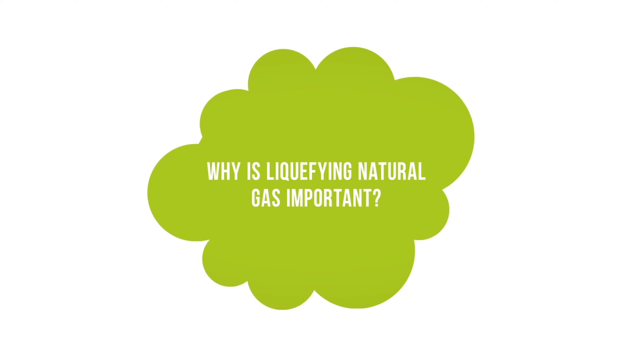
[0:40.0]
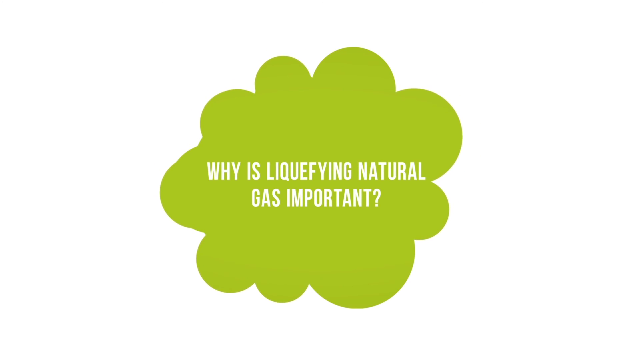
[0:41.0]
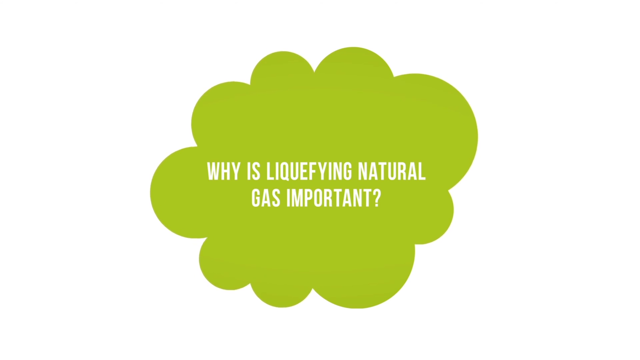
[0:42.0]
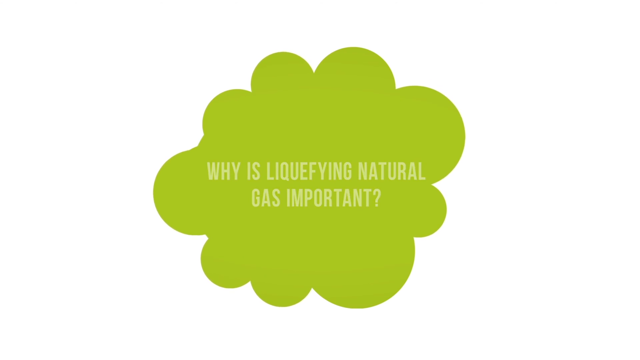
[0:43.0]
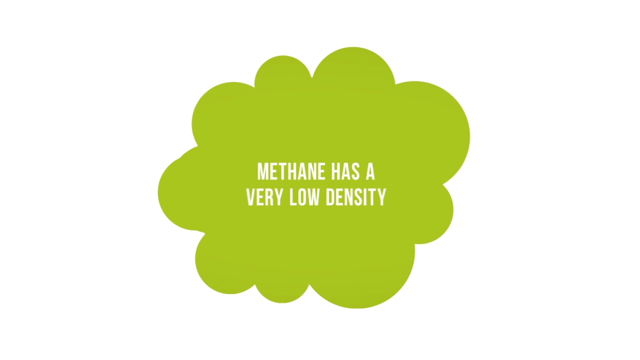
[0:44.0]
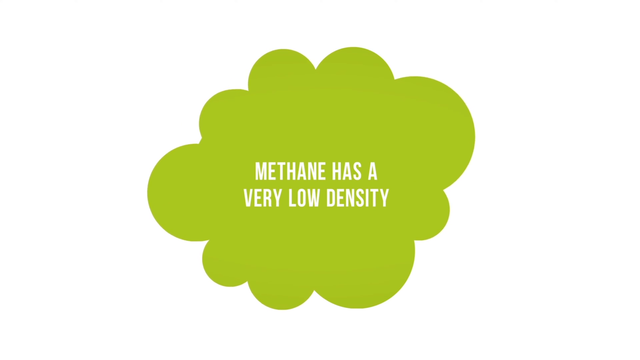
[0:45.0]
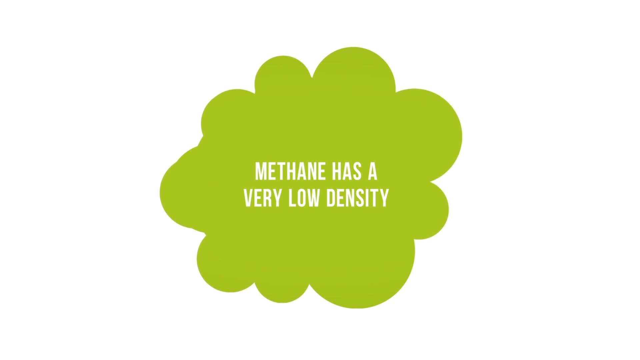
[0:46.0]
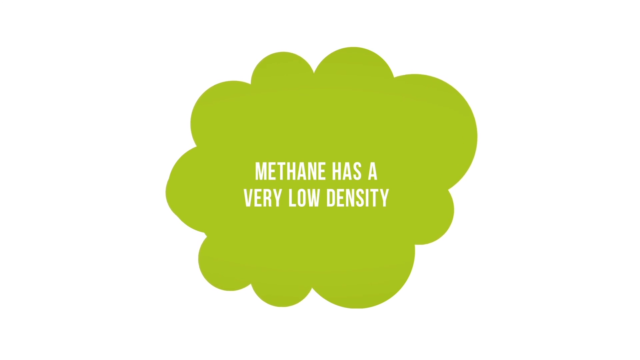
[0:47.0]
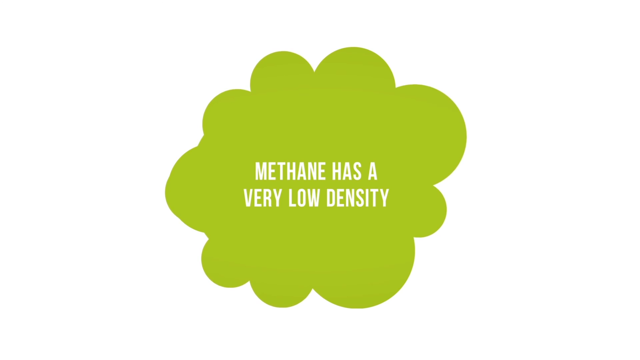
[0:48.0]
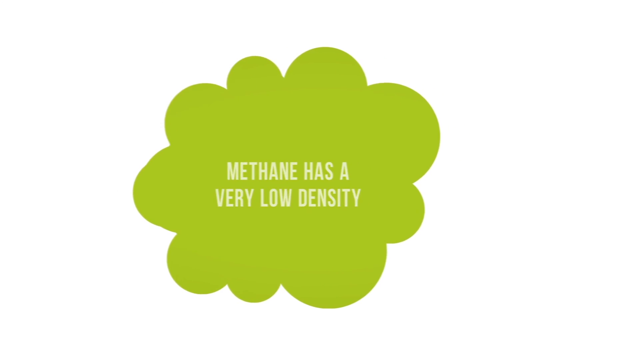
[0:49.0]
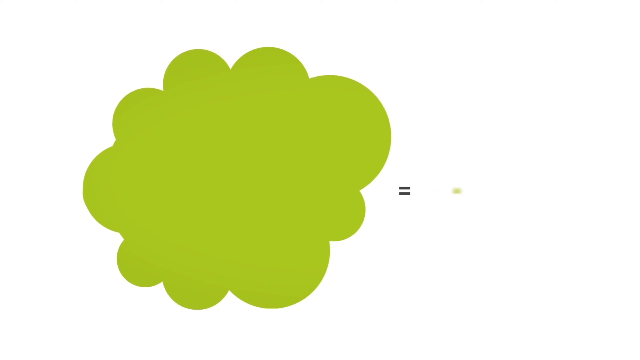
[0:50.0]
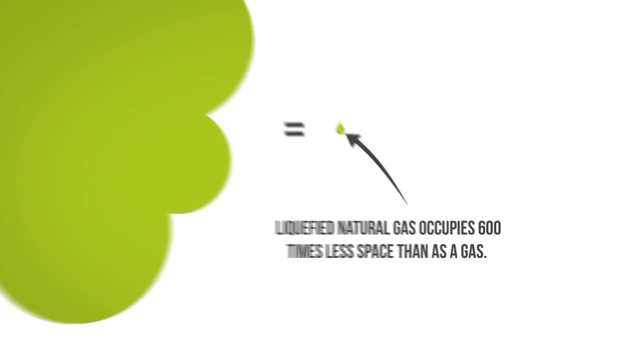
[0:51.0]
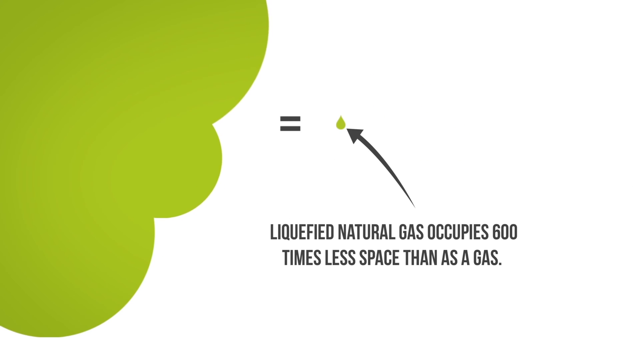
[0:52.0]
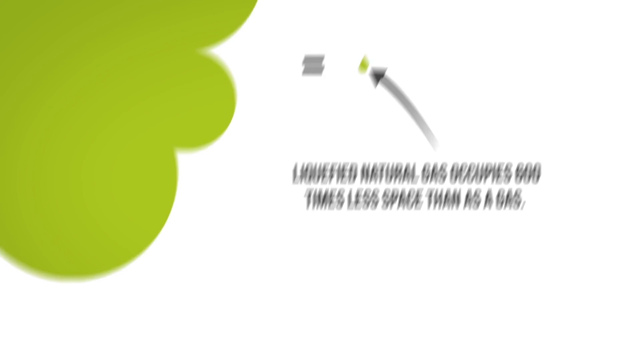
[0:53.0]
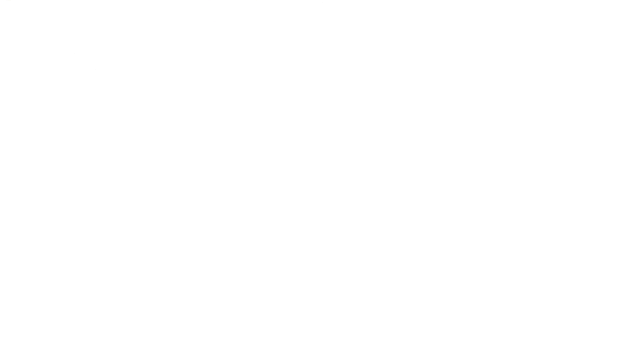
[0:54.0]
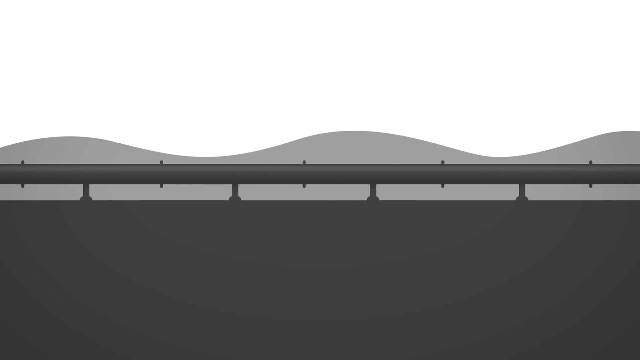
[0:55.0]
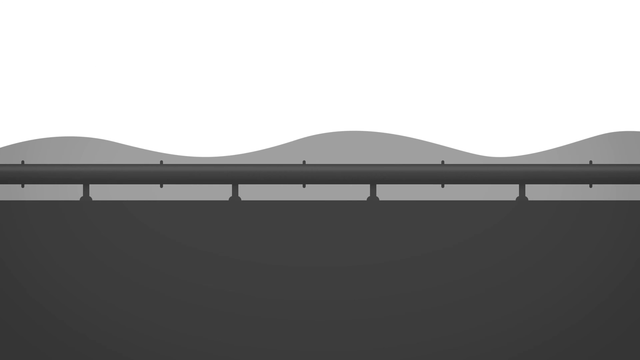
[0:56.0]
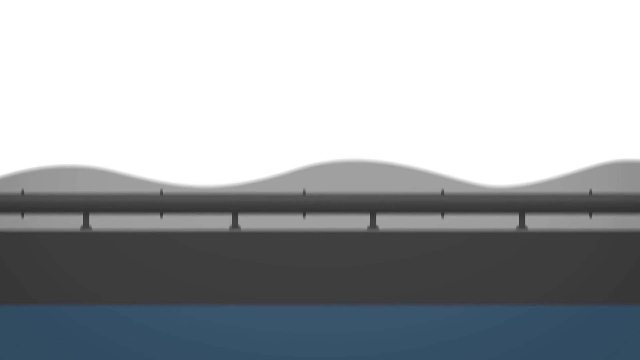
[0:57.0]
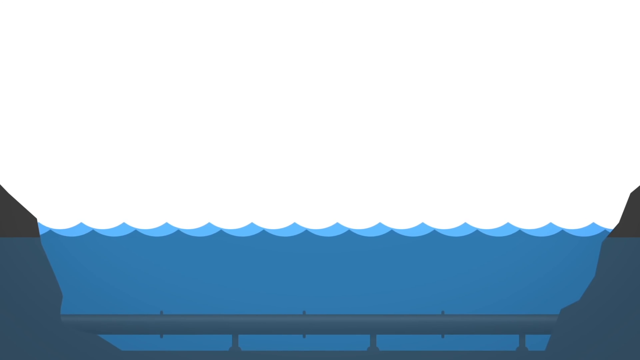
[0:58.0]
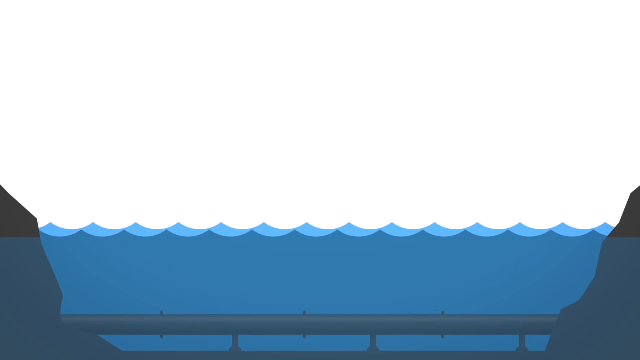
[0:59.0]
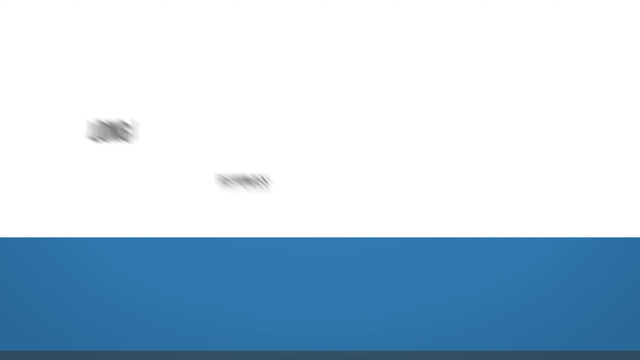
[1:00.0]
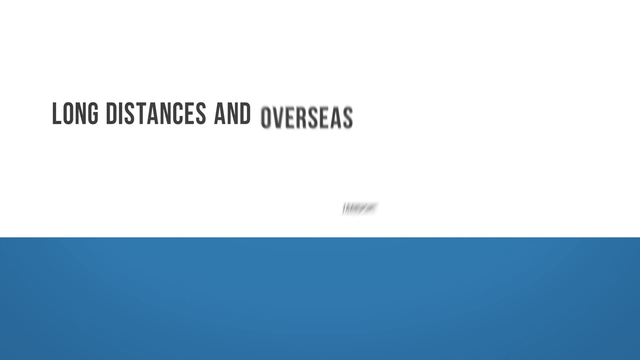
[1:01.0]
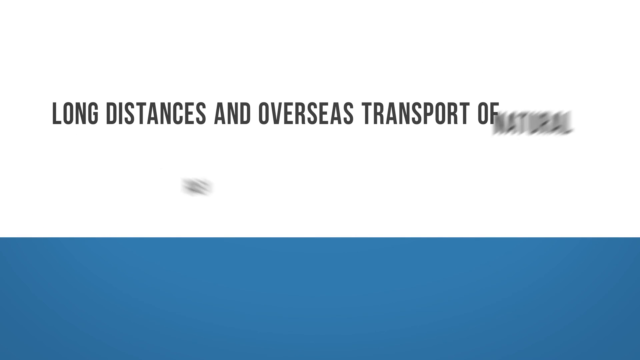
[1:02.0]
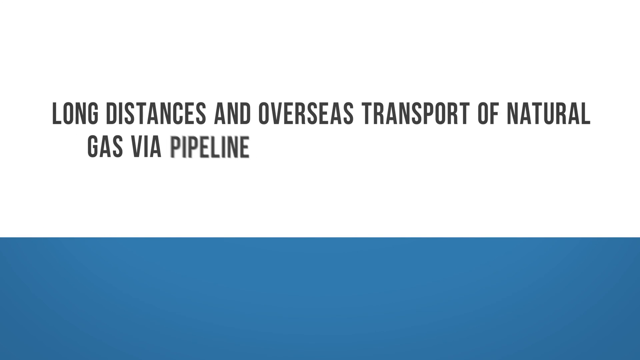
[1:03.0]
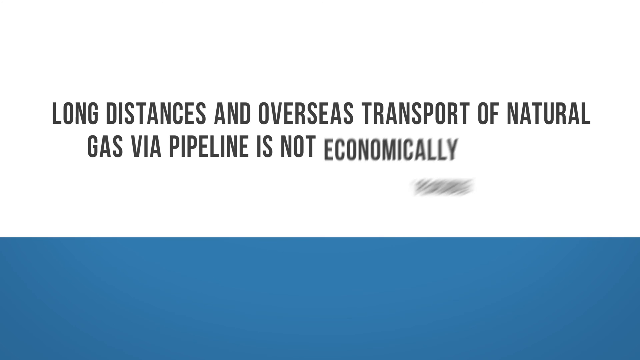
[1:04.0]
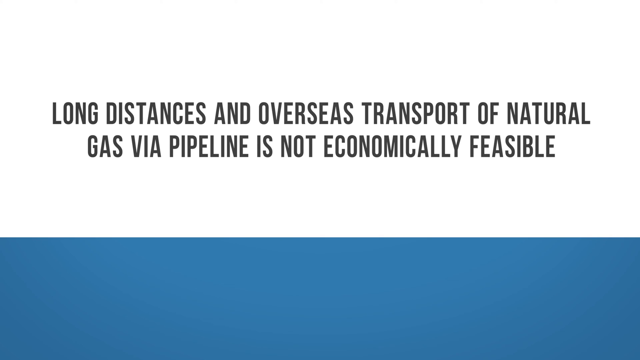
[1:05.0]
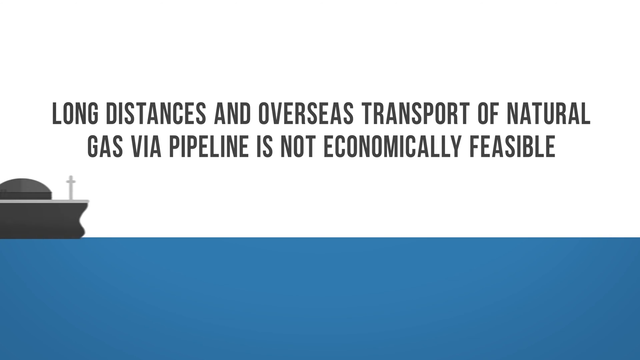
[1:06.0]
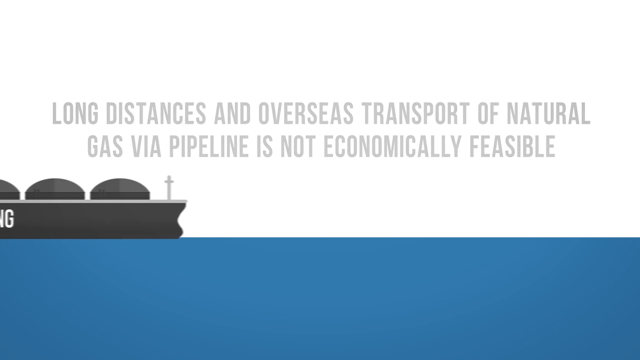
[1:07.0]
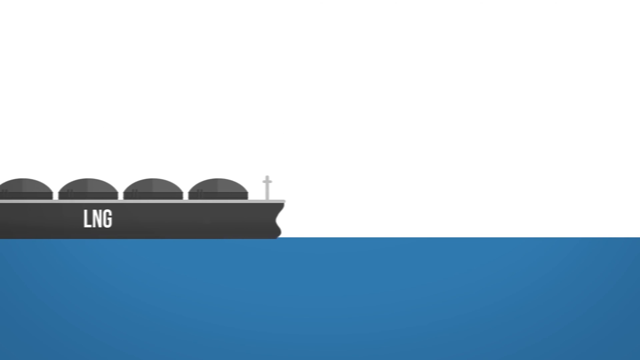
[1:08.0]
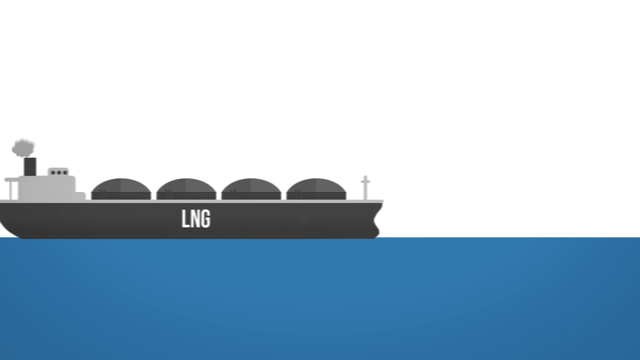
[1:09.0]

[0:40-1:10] The question "why is liquefying natural gas important" appears with a little green bubble. Text reads "methane has a very low density", followed by an equals sign and "liquefied natural gas occupies 600 times less space than as a gas", with a little drop shown. Next there is something like a little road or railings and a blue body of water, with the text "long distances and overseas transport of natural gas via pipeline is not economically feasible". A ship carrying LNG appears on the water.